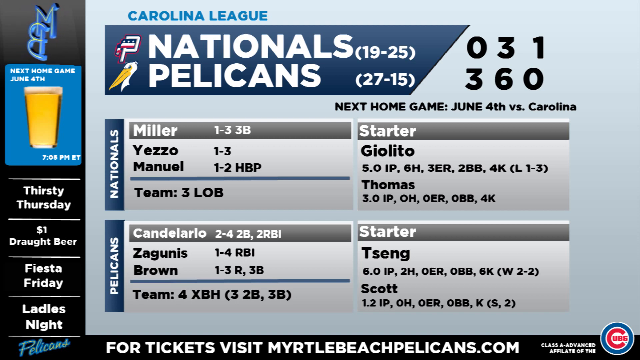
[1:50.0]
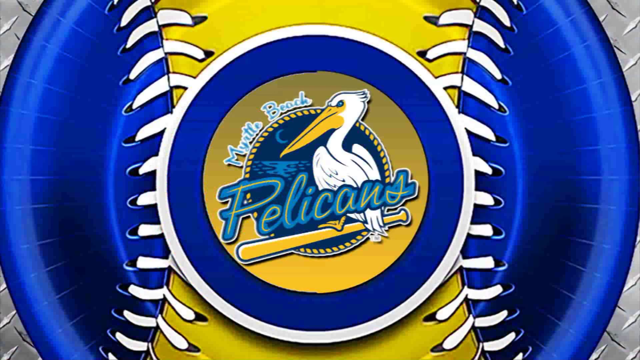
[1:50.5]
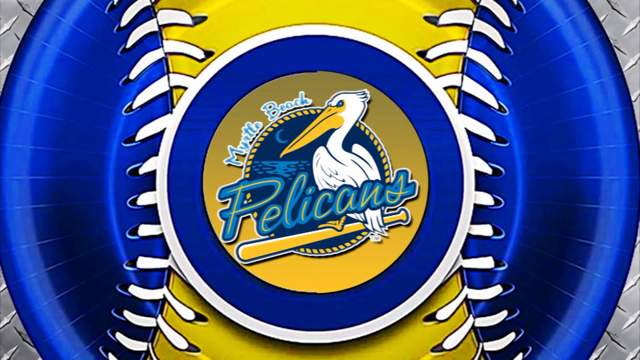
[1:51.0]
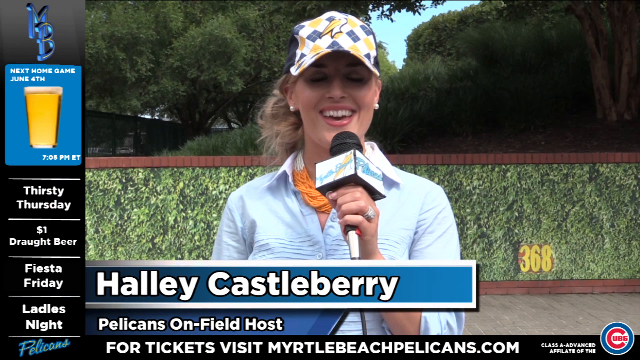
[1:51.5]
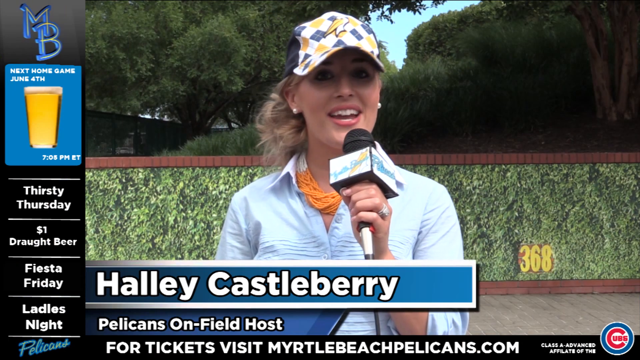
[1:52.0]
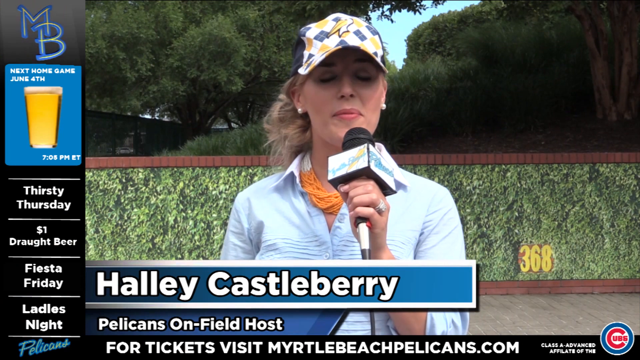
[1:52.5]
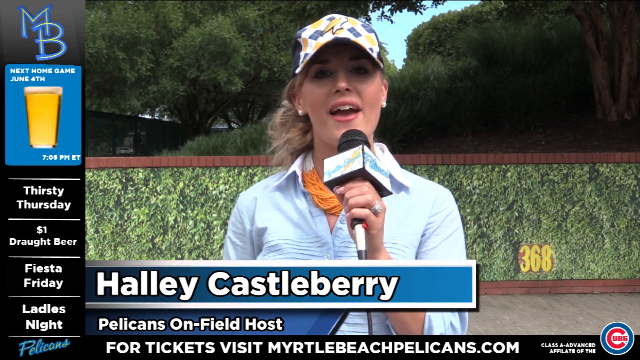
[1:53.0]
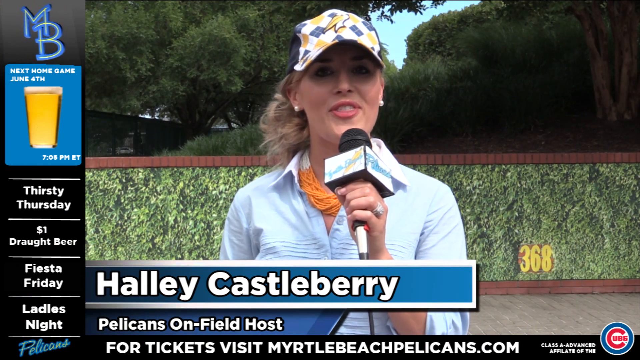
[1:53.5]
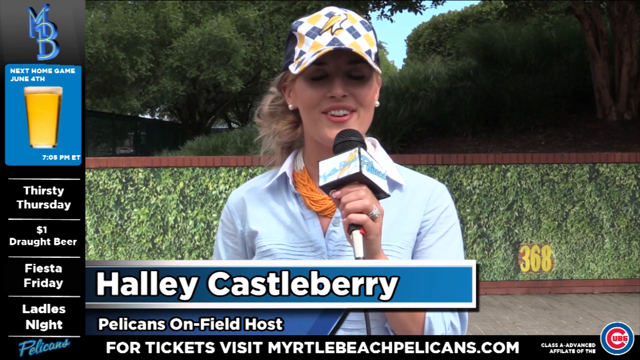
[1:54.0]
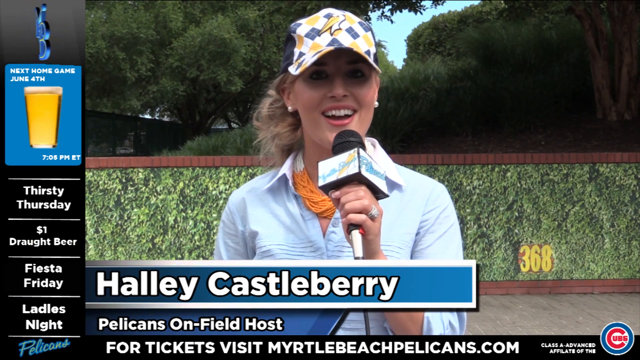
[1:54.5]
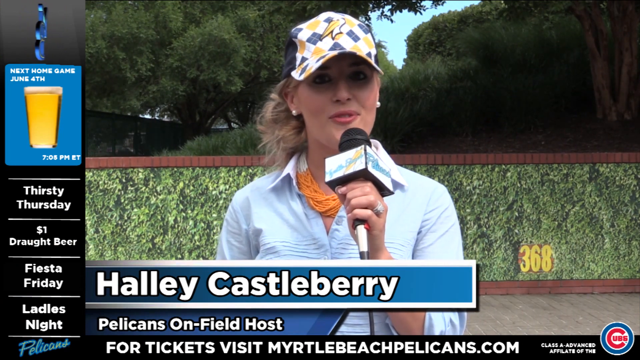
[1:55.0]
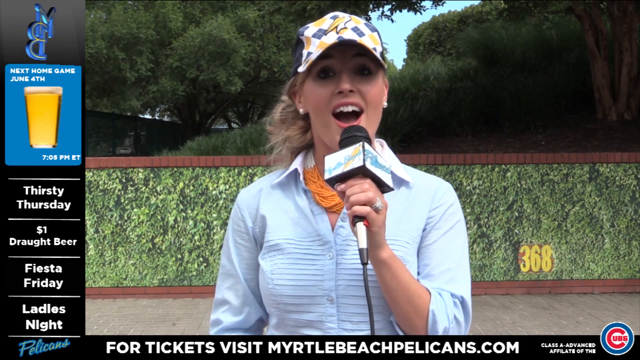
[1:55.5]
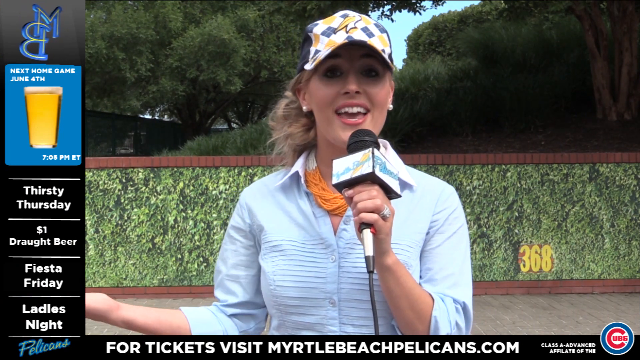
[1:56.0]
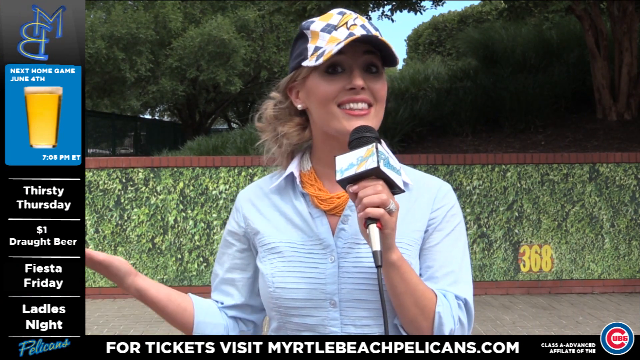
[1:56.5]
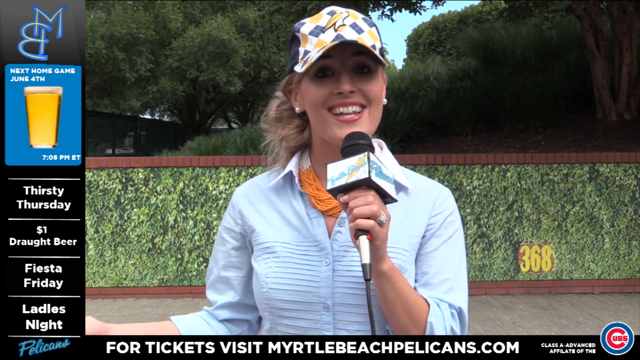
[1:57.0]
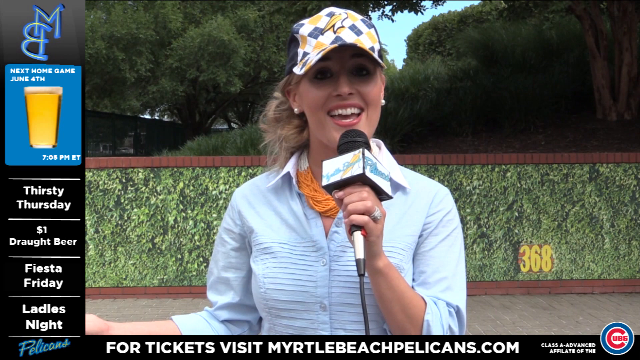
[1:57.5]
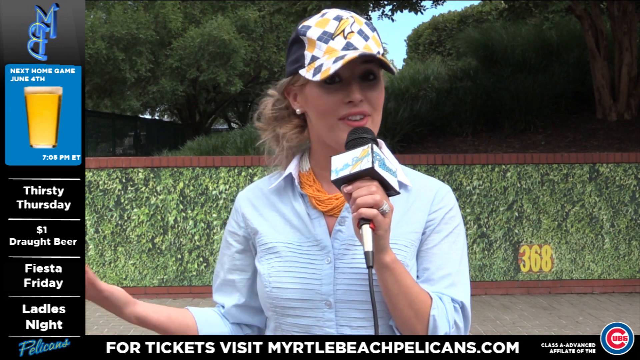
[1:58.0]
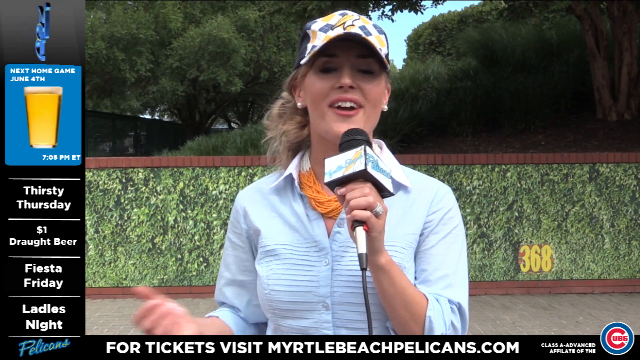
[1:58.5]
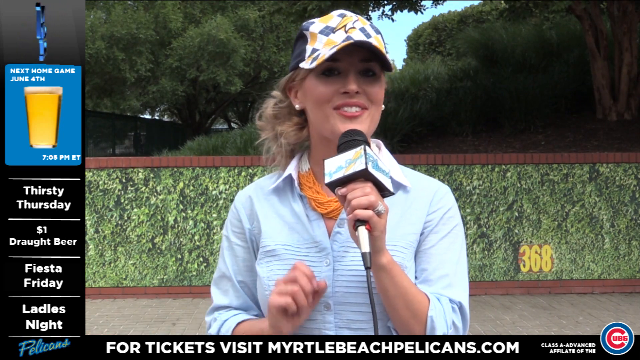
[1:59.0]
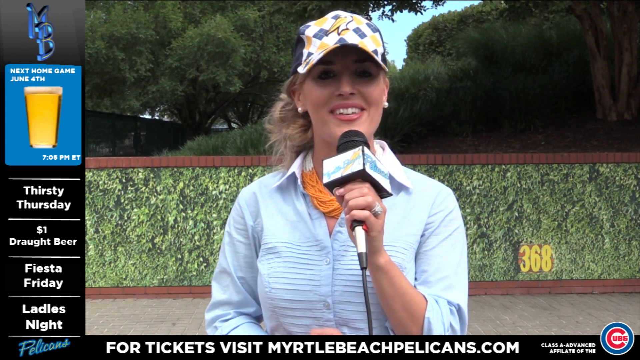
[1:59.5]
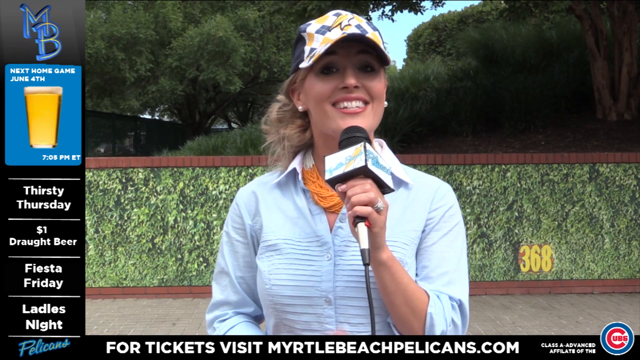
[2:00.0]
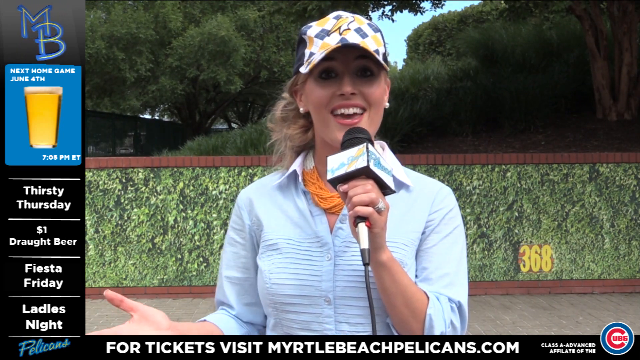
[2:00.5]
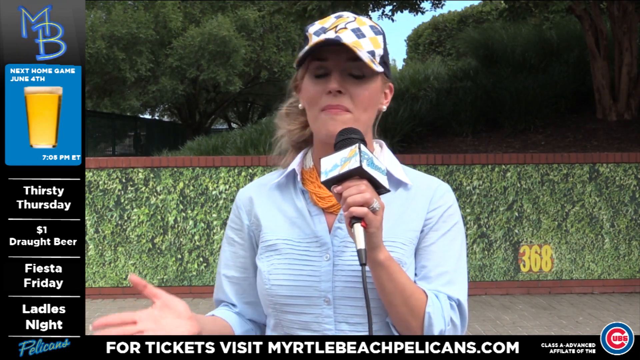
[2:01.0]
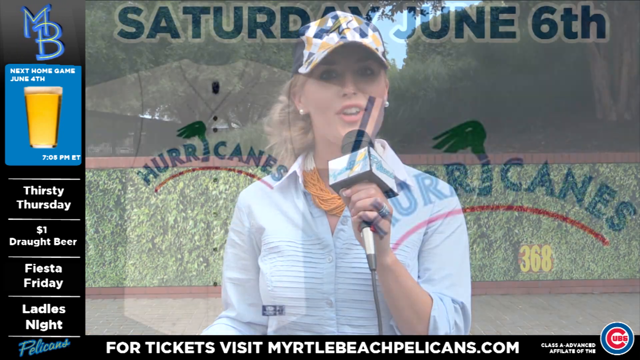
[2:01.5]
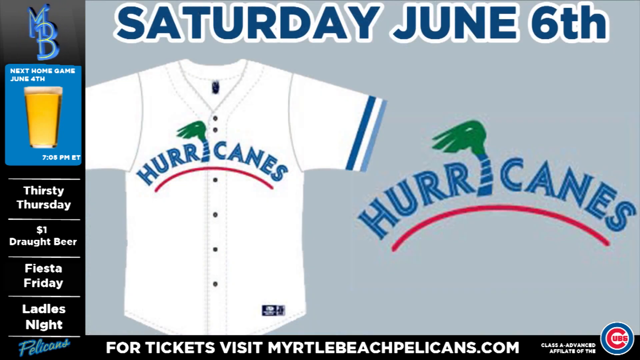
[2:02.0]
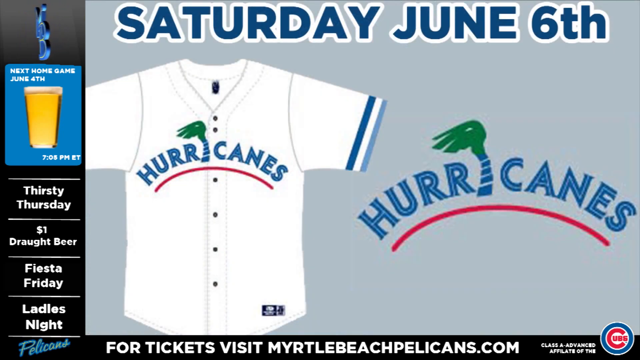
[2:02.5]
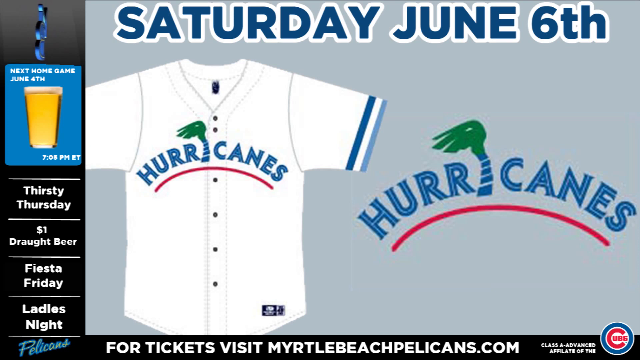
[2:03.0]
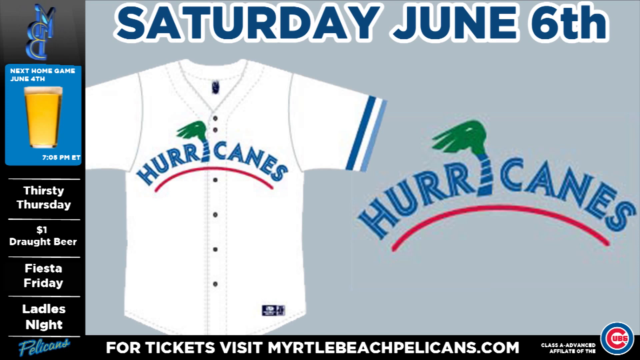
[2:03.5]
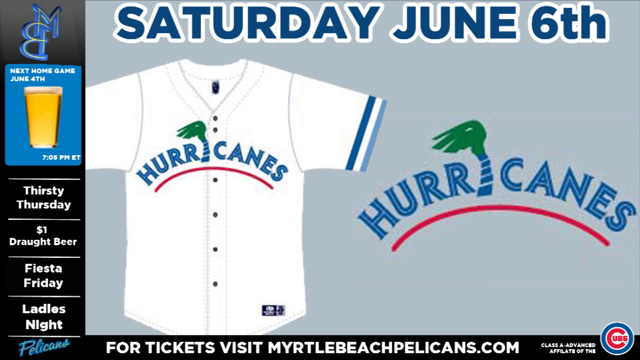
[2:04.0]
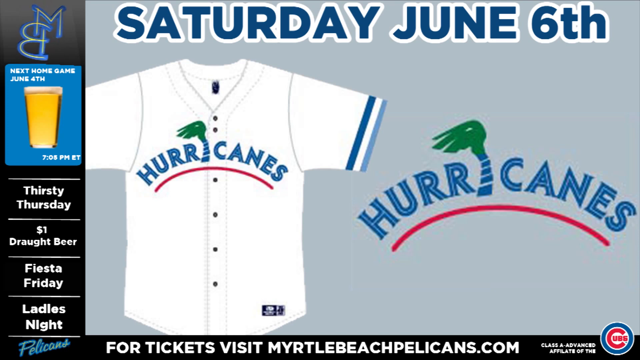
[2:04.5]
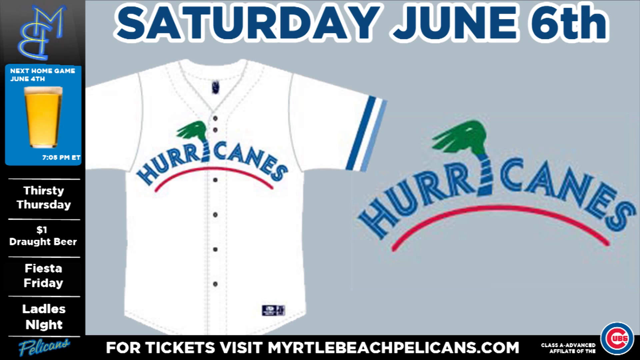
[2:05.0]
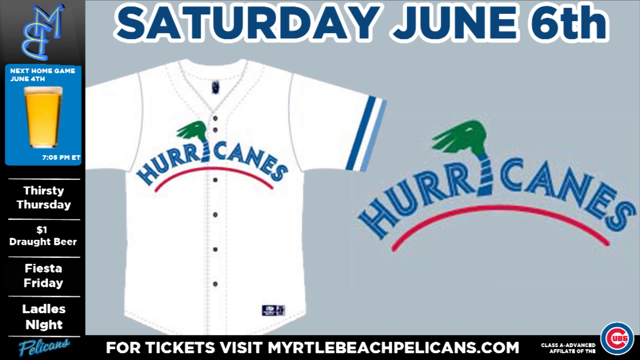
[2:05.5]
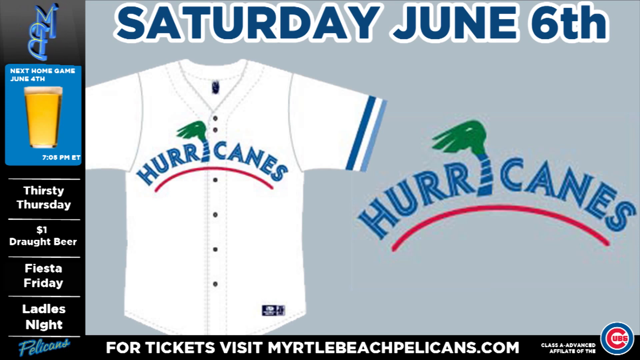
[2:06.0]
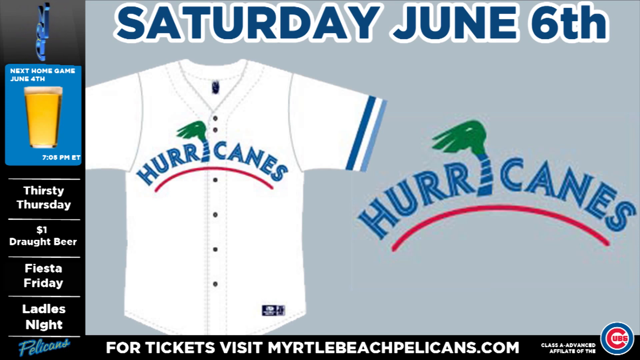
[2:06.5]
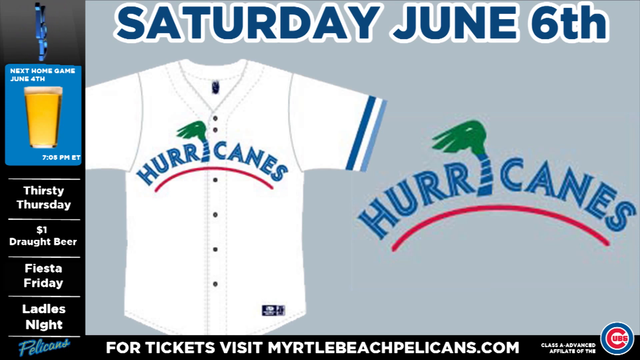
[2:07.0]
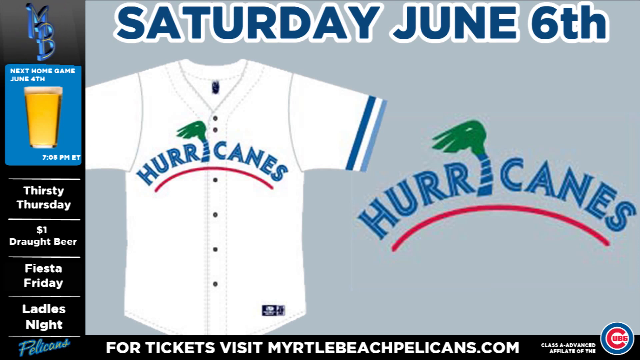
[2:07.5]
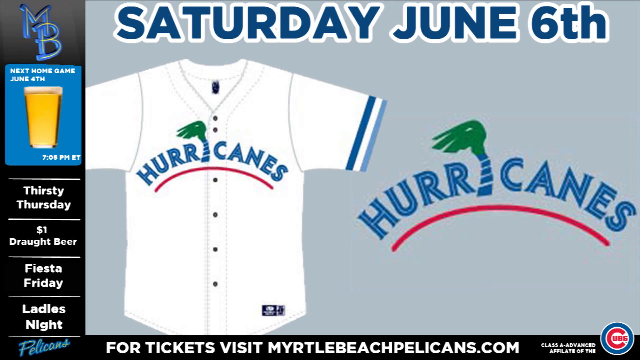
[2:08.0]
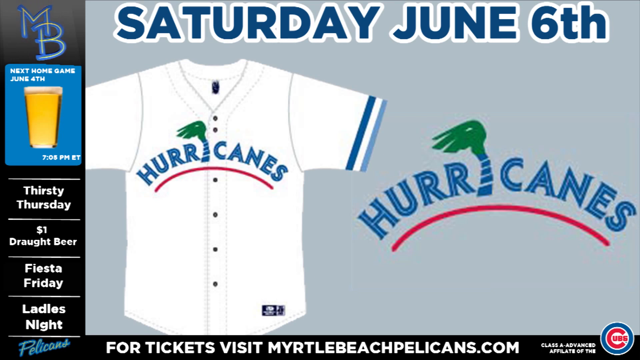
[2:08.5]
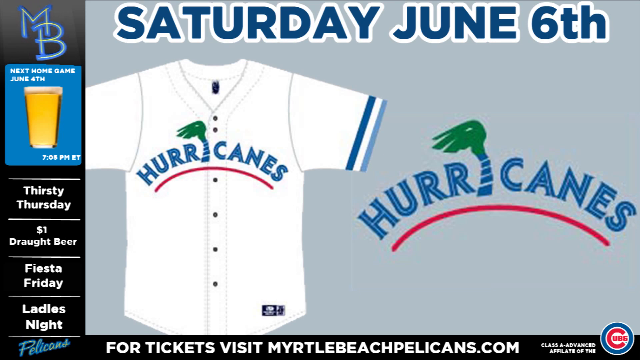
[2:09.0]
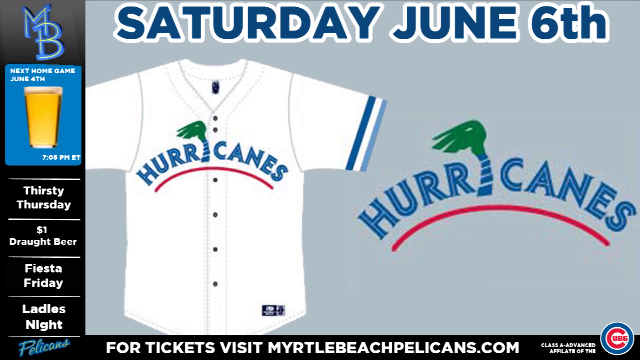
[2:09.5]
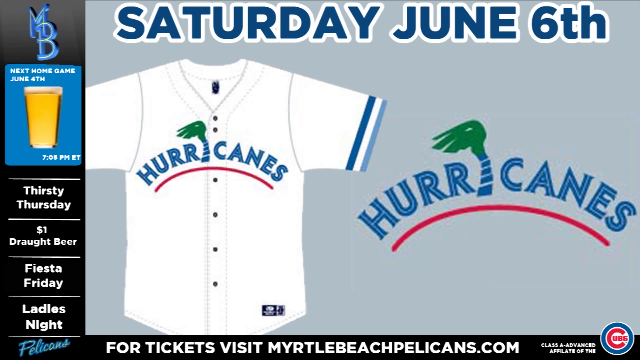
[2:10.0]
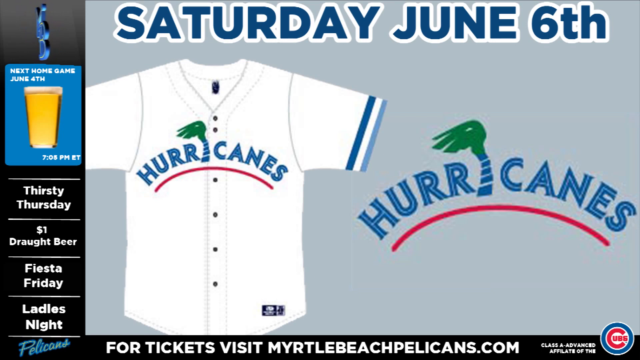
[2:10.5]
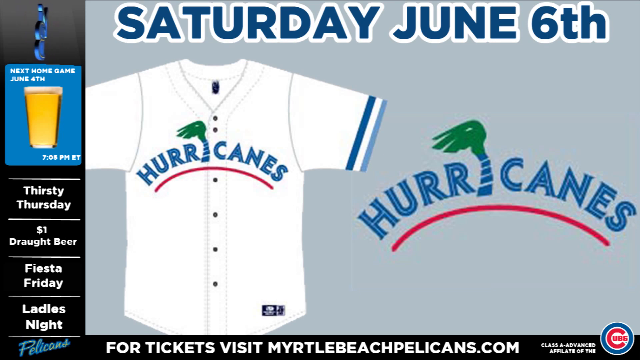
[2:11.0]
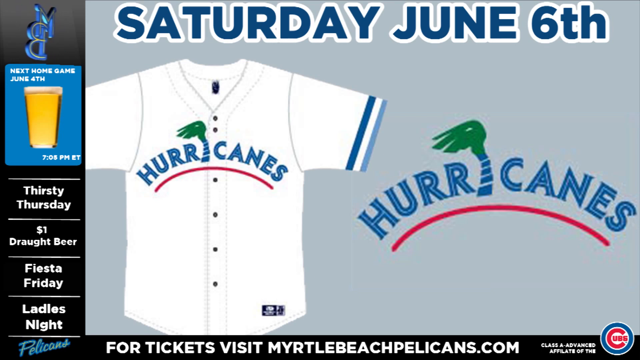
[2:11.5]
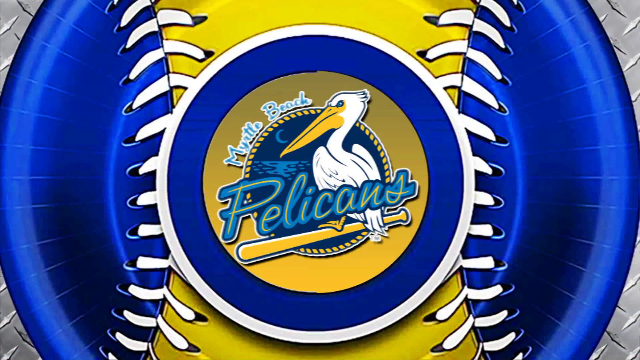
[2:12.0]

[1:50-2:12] The same pop-up with stats on players and the team and upcoming events remains on screen; on the left side in white font it reads "next home game, June 4th, 7 o'clock p.m." The pop-up closes, and a woman named Halley Cassowberry appears. She wears an orange necklace matching the Pelican colors, a blue shirt, pearl earrings, and a Pelican hat, with a ponytail coming out on the side. She holds a Pelican microphone in her left hand and wears what looks like a wedding ring. As she talks, text reads "Pelican's co-host," and she moves her free hand around while talking. Text then reads "Saturday, June 6th, Hurricanes."